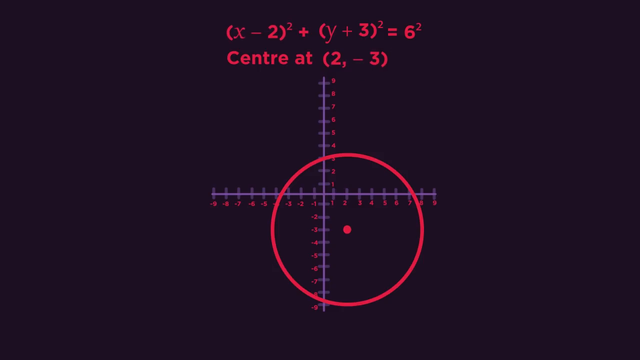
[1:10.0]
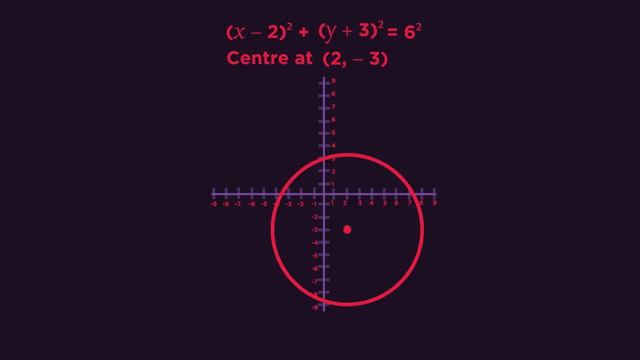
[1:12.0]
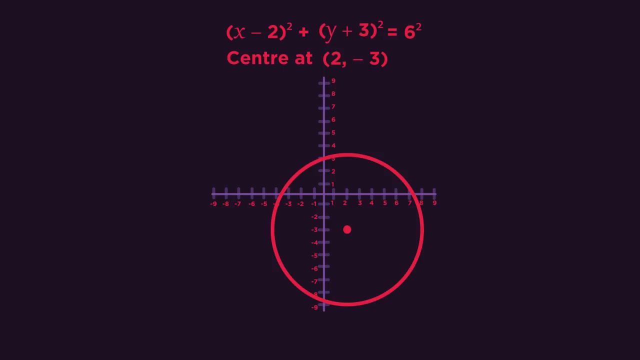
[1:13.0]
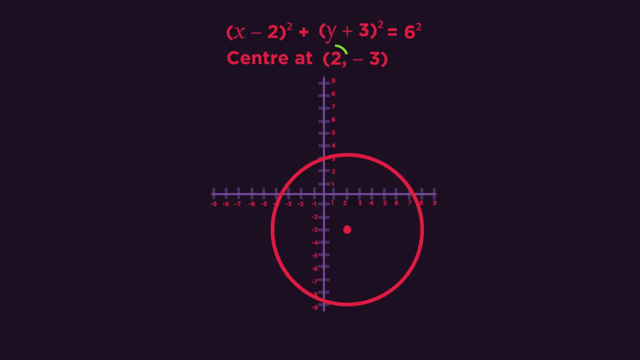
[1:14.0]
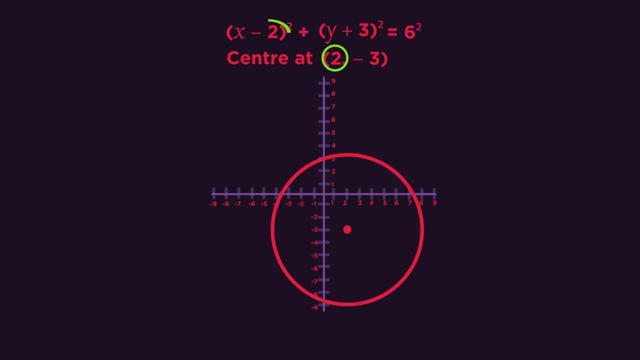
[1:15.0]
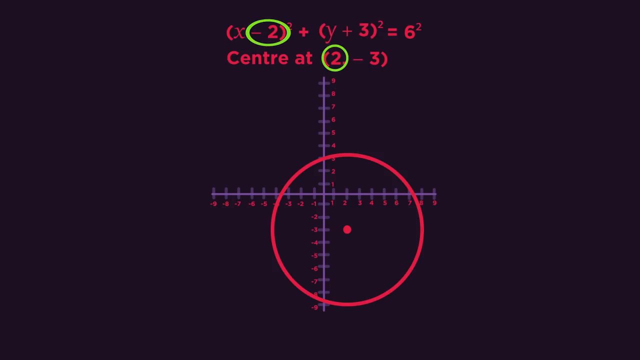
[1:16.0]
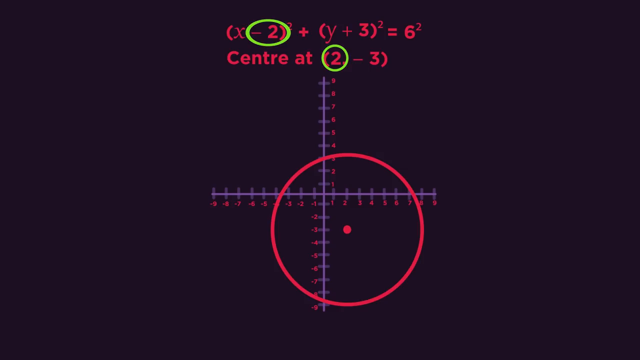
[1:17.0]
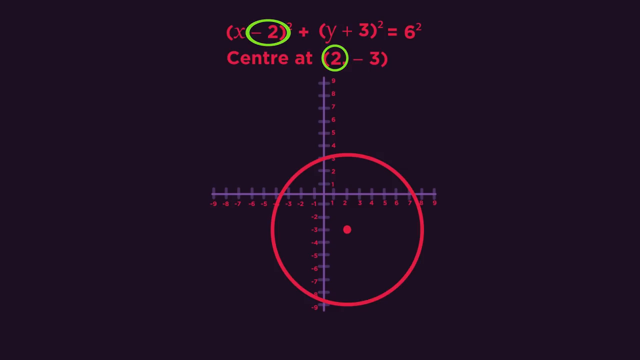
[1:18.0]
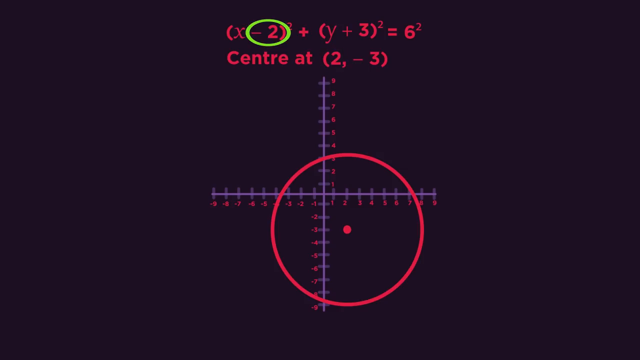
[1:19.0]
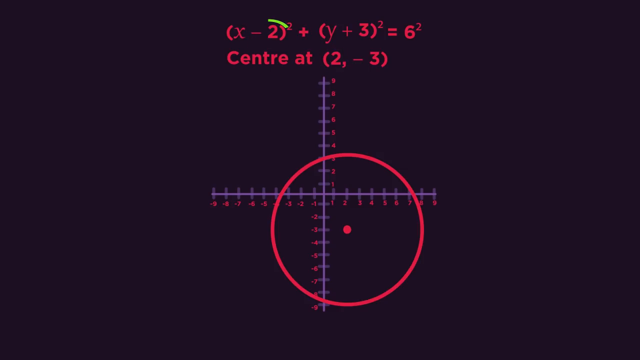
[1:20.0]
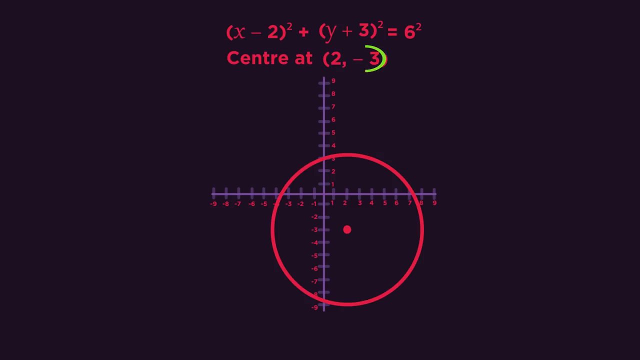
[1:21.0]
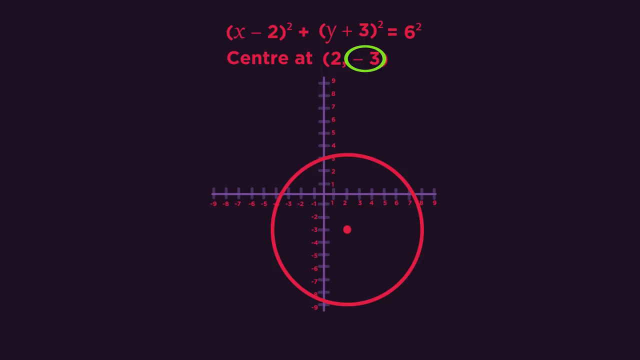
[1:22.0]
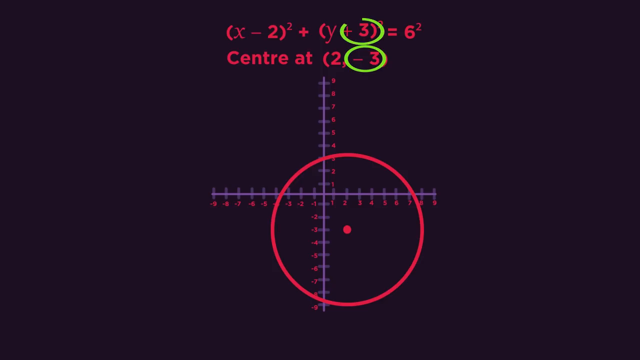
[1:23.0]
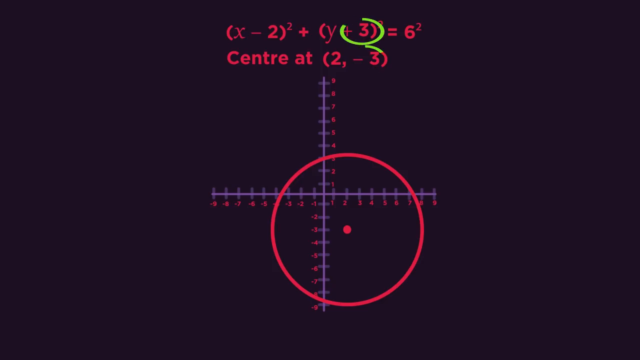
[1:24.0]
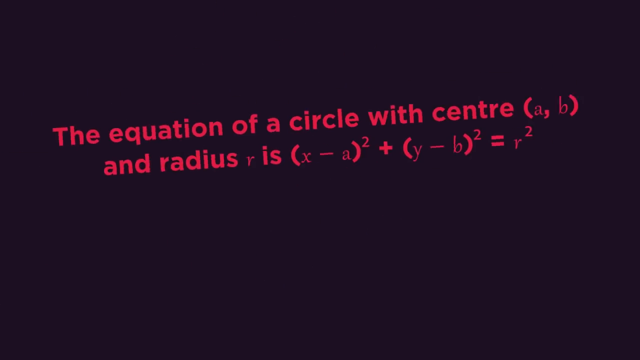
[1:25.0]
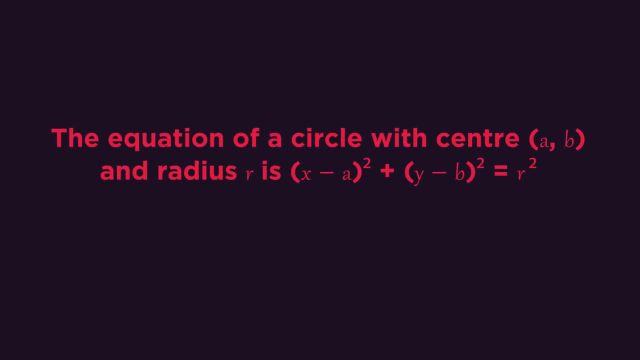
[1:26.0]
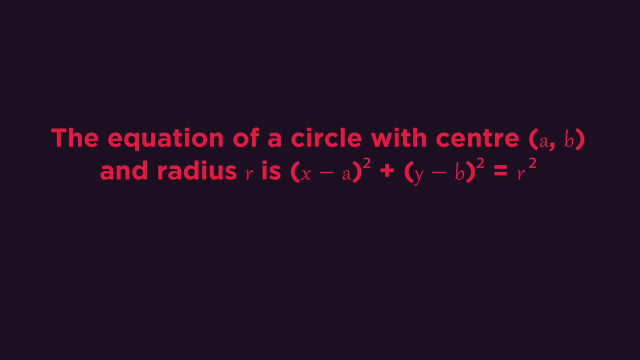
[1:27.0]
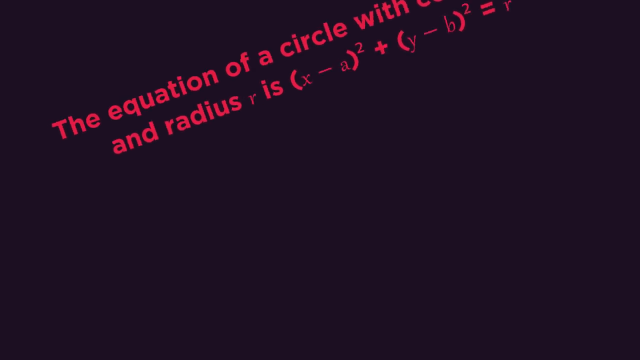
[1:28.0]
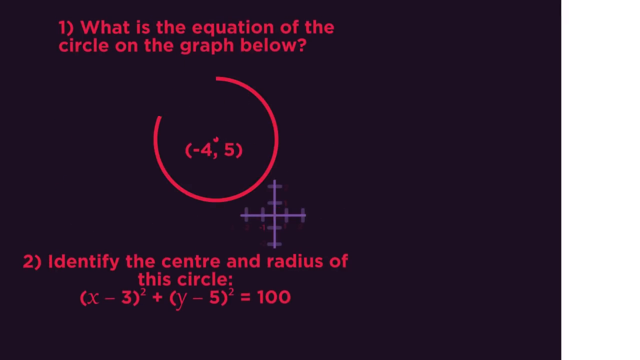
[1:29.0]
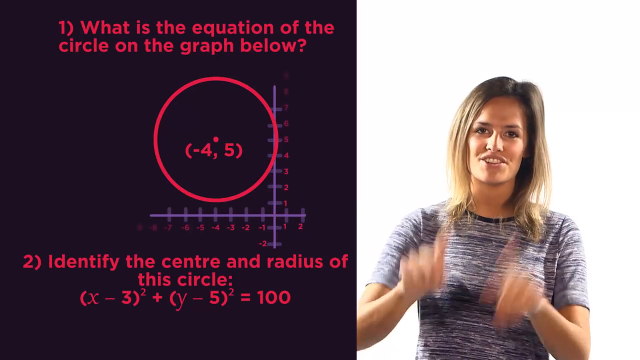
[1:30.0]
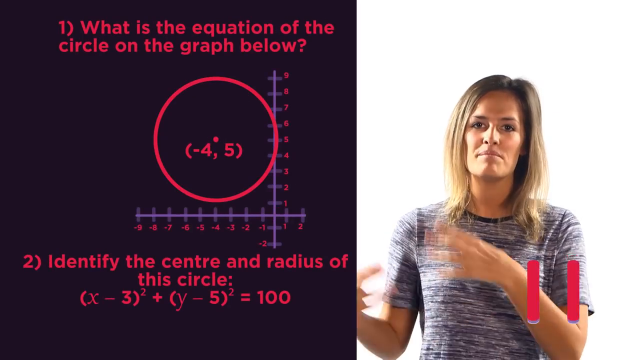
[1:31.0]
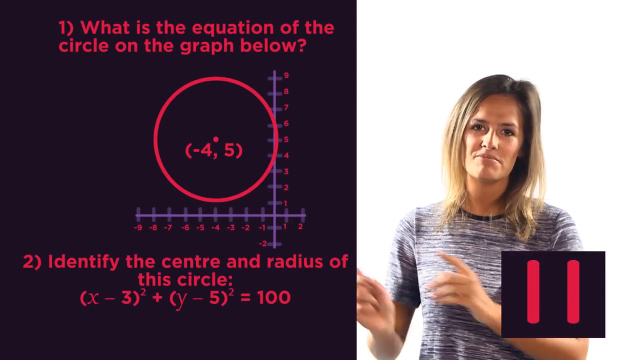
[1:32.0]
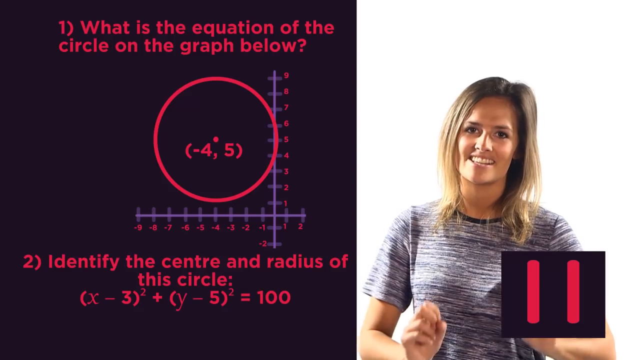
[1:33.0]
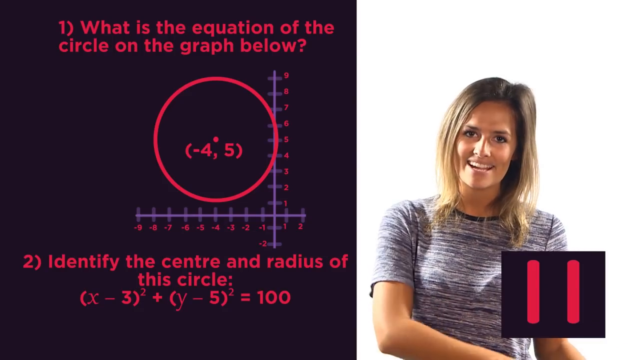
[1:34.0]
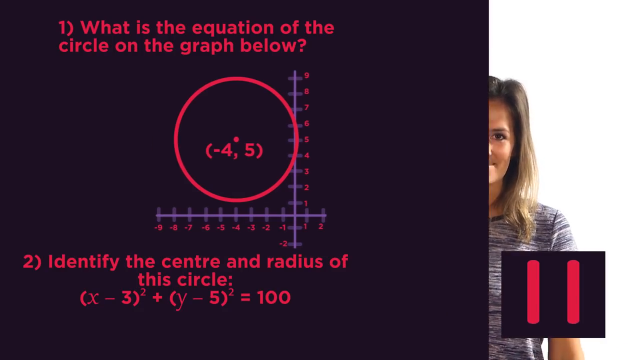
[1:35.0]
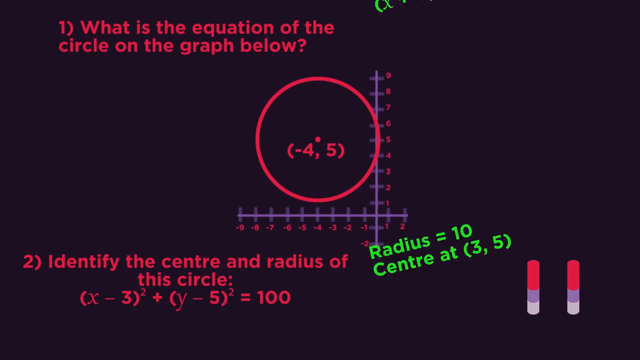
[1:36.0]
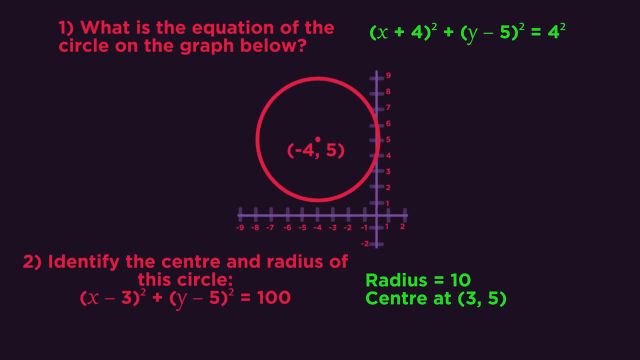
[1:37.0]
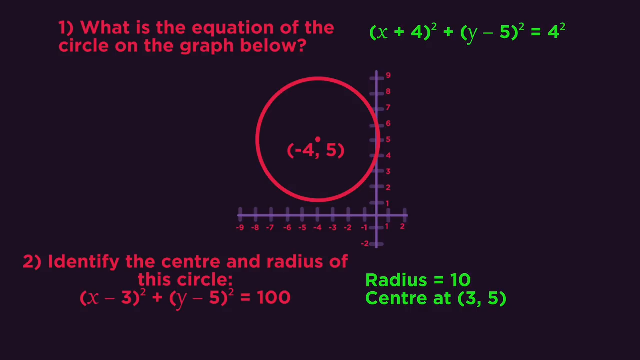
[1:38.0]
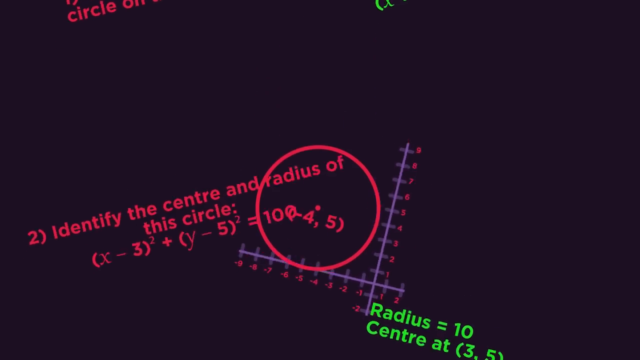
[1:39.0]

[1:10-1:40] The circle centered at (2, -3) remains, and at the top of the screen the equation (x − 2)² + (y + 3)² = 6² appears in red along with "center at 2 negative 3". Below that is an xy-axis with a red dot at (2, -3) and a circle drawn around it. The 2 in the equation is then marked as the x value appearing with a minus, and the -3 as appearing as a plus 3. Red text on a black background reads "the equation of a circle with center a, b, and radius r is" (x − a)² + (y − b)² = r². The screen then splits. The black part, in red lettering, reads "1. what is the equation on the circle on the graph below?" above a red point at (-4, 5) with a circle around it on a purple xy-axis, and then "2. identify the center and radius of the circle" with (x − 3)² + (y − 5)² = 100, also in red. On the right-hand side of the screen is the woman presenter in a black and white striped shirt, pointing to the text. The number 11 comes on screen. More equations then appear in green: (x + 4)² + (y − 5)² = 4², and "radius equals 10, center at three, five".